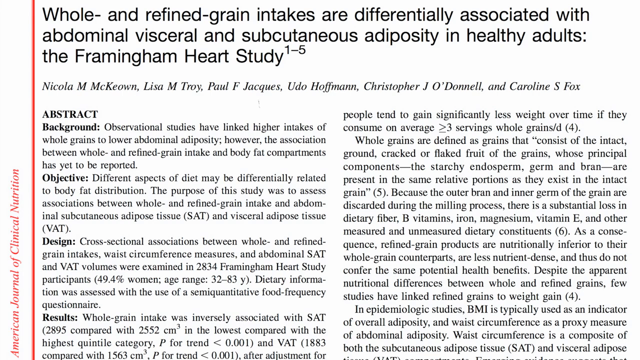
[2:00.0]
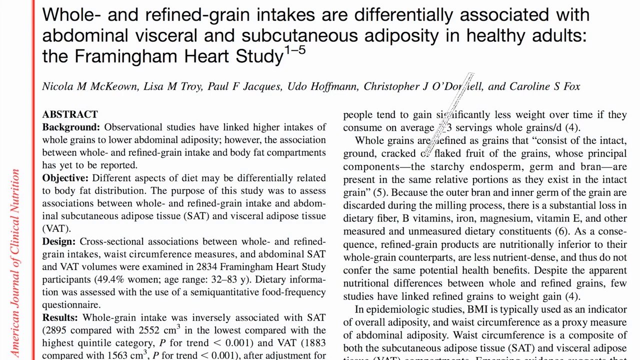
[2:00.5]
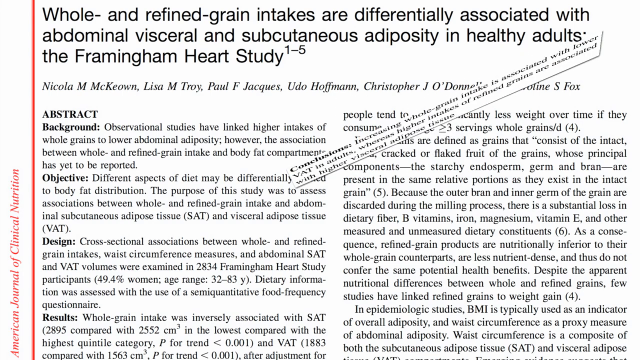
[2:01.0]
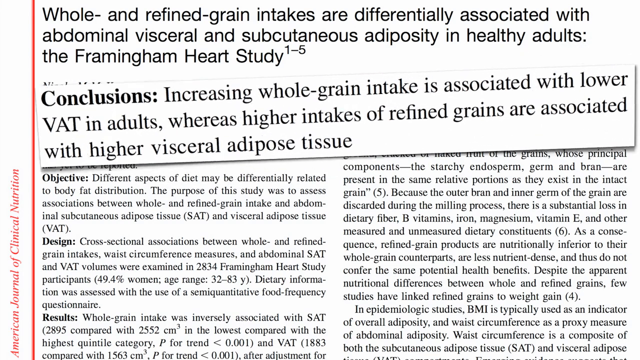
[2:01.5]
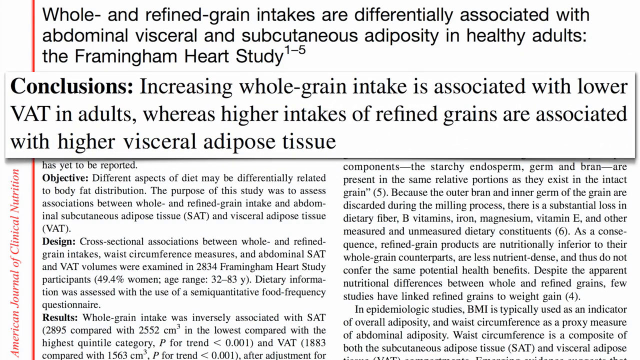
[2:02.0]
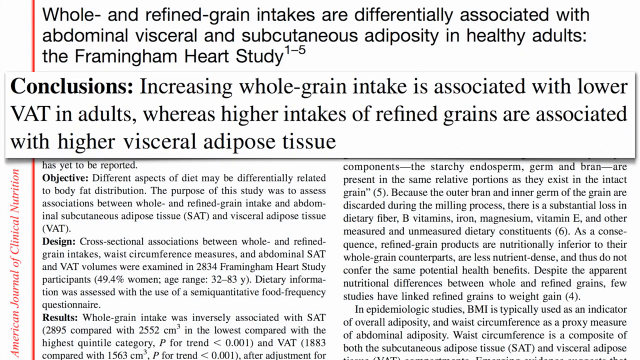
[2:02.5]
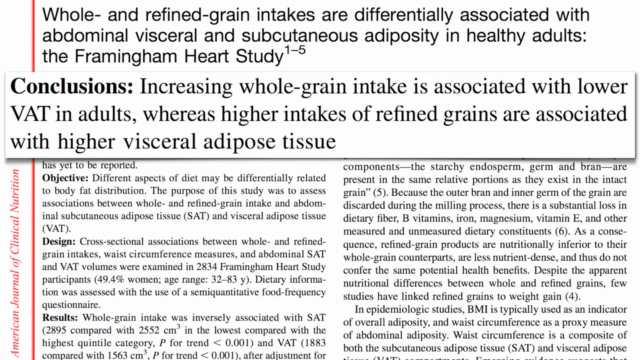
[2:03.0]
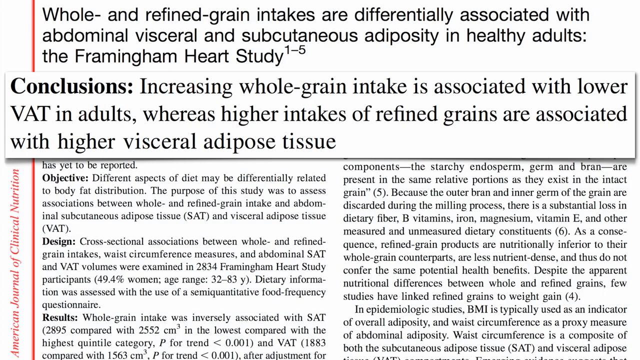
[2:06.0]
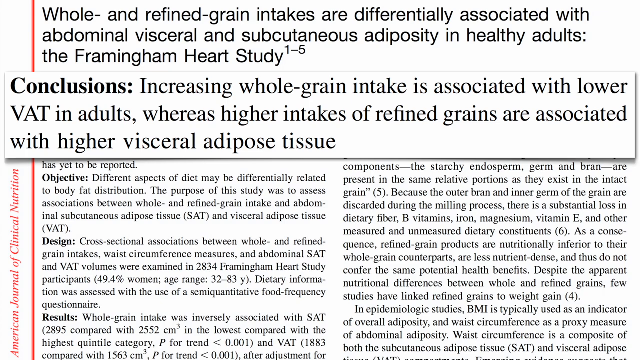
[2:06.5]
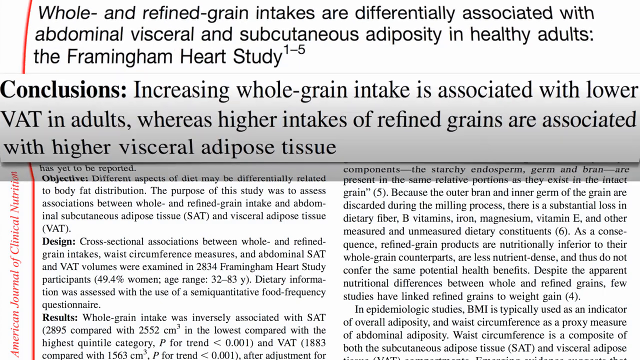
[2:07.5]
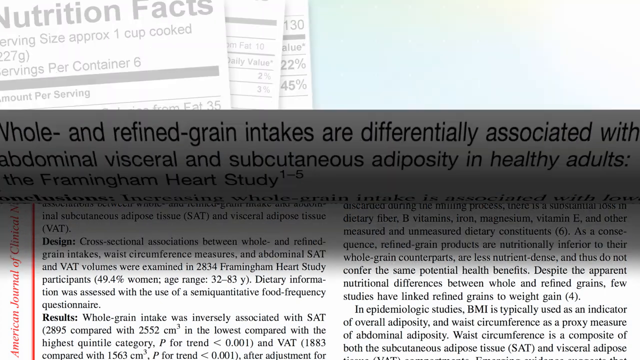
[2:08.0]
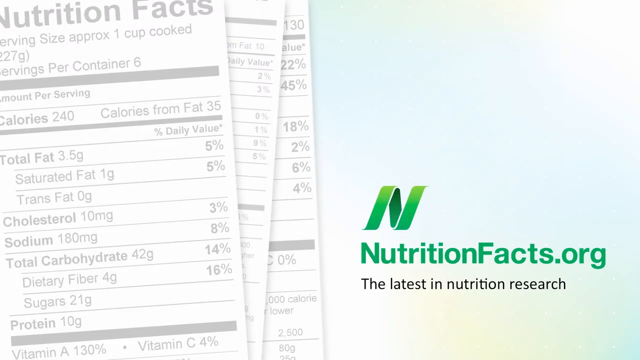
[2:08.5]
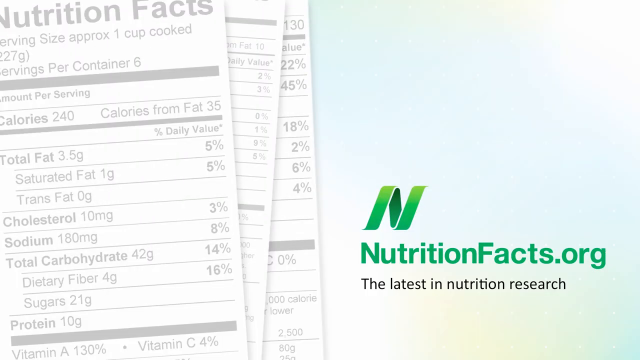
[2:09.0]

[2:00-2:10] An article is shown, titled "whole and refined grain intakes are differently associated with abdominal, visceral, and subcutaneous adiposity in healthy adults. The Framingham Heart Study." The article begins with an abstract. Eventually, text is superimposed onto the screen, reading "conclusions, increasing whole grain intake is associated with lower VAT in adults, whereas higher intake and refined grains are associated with higher visceral adipose tissue." At the end of the video, the NutritionFacts.org logo appears again.